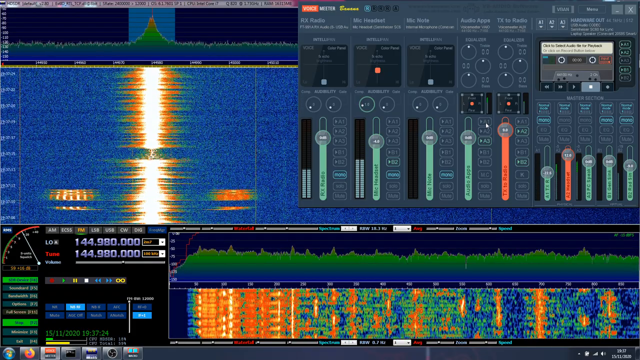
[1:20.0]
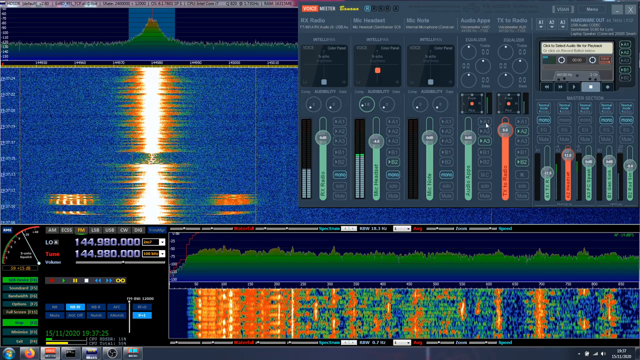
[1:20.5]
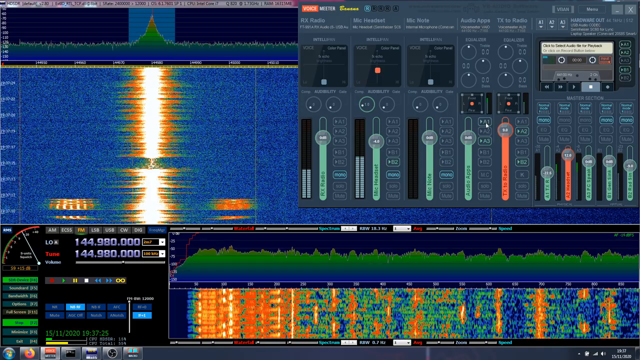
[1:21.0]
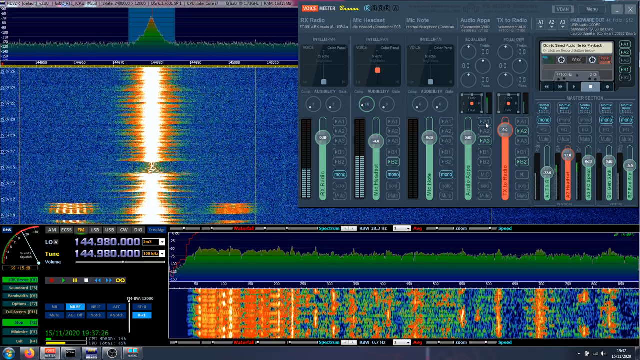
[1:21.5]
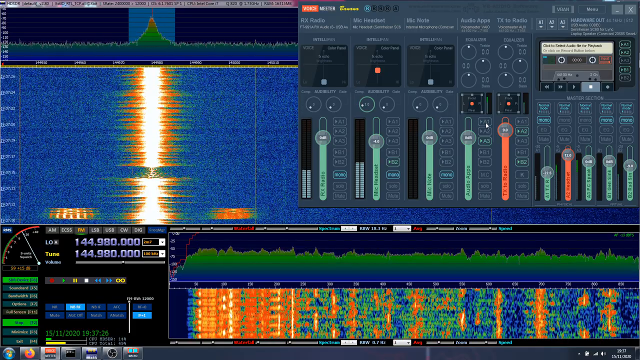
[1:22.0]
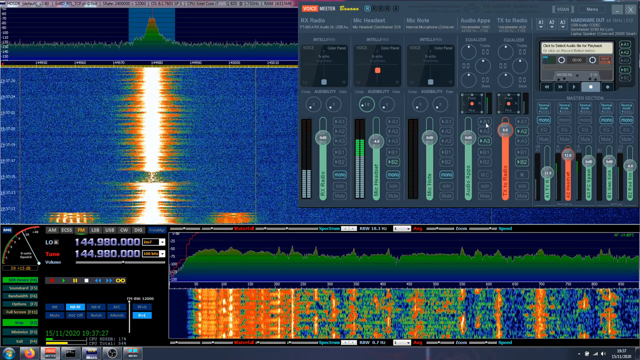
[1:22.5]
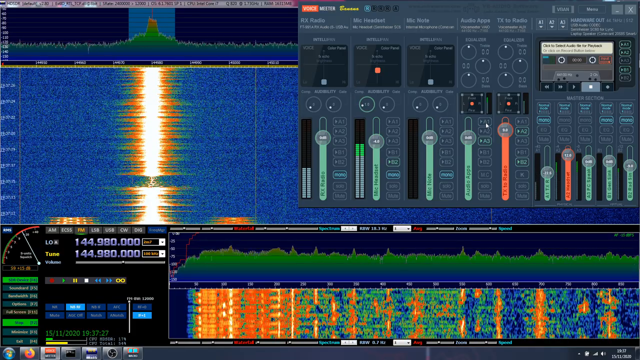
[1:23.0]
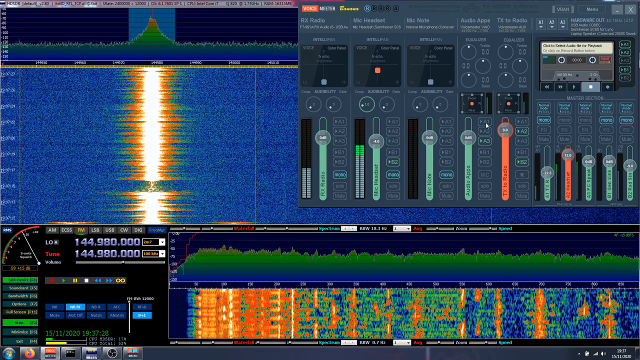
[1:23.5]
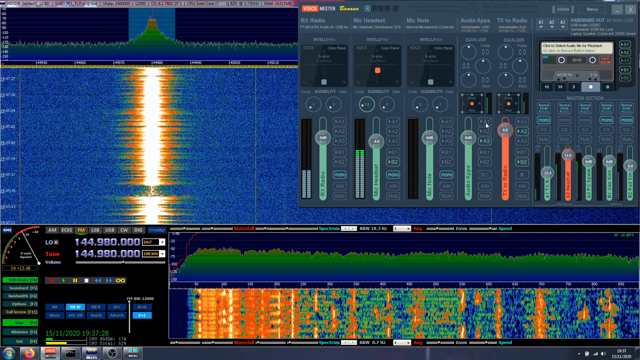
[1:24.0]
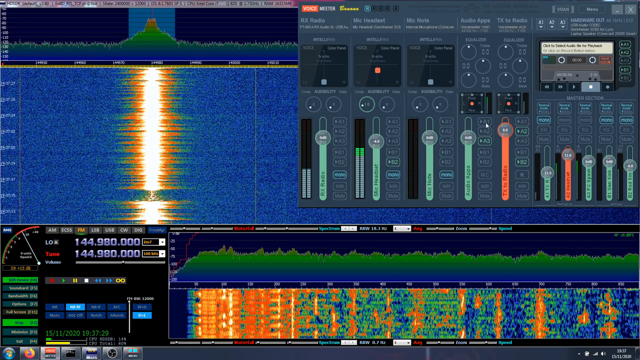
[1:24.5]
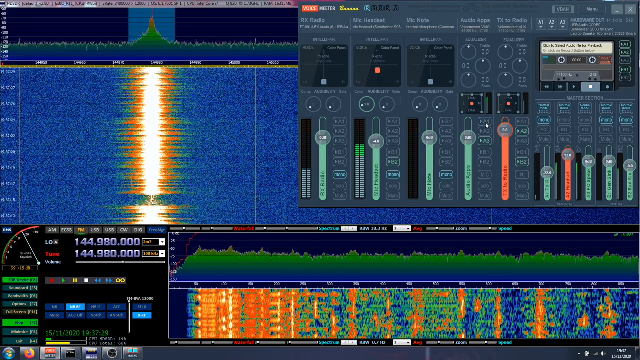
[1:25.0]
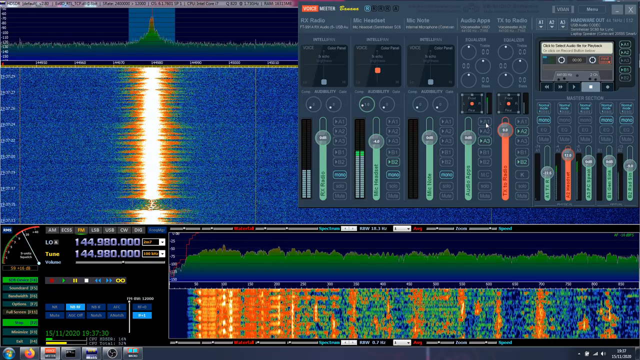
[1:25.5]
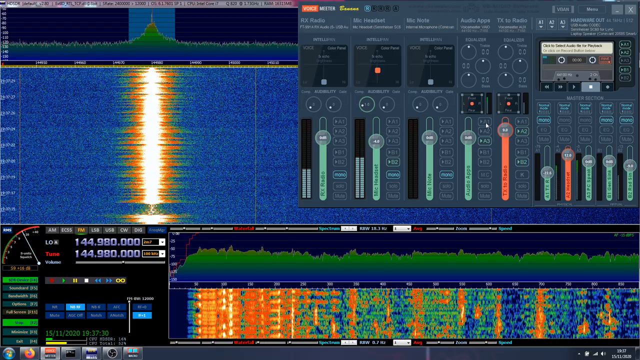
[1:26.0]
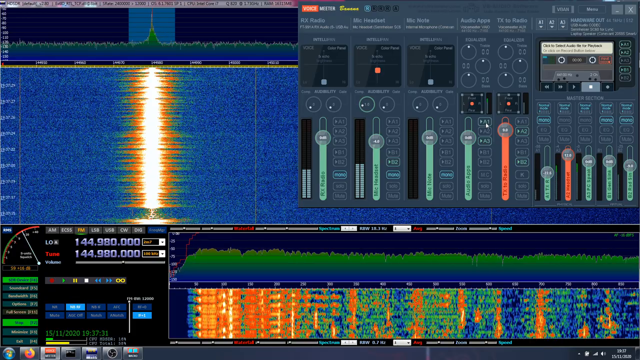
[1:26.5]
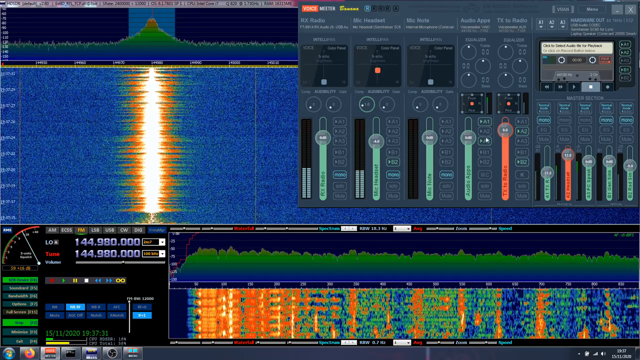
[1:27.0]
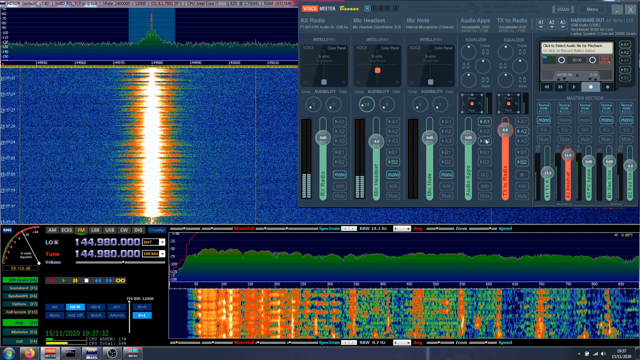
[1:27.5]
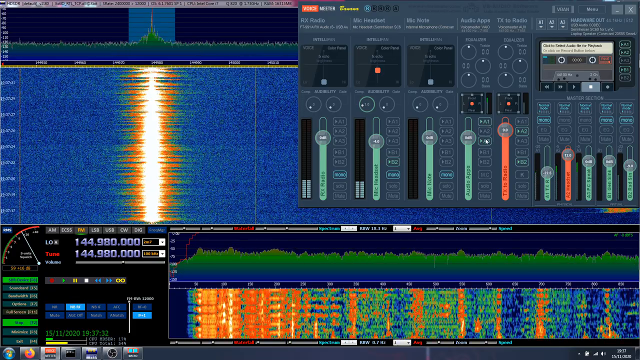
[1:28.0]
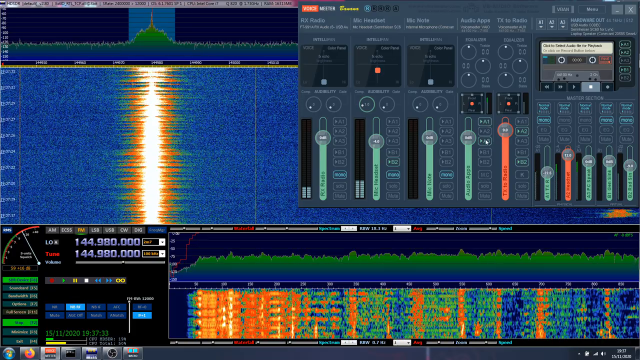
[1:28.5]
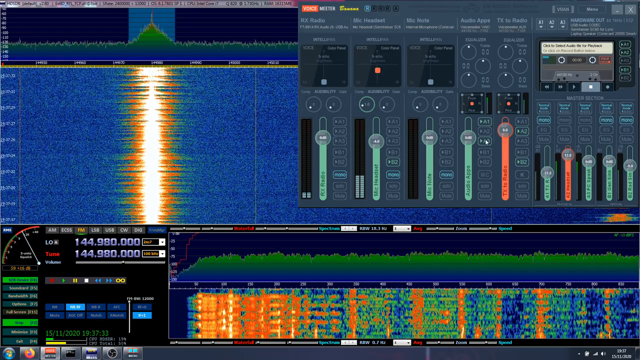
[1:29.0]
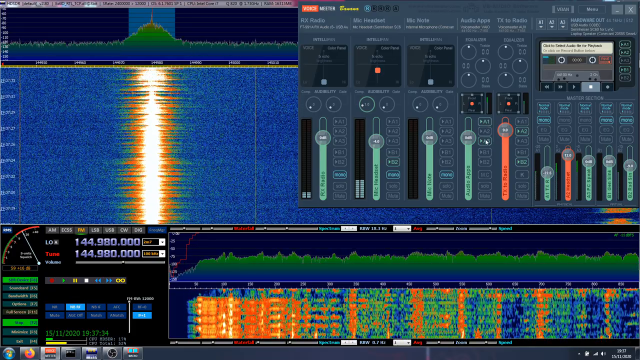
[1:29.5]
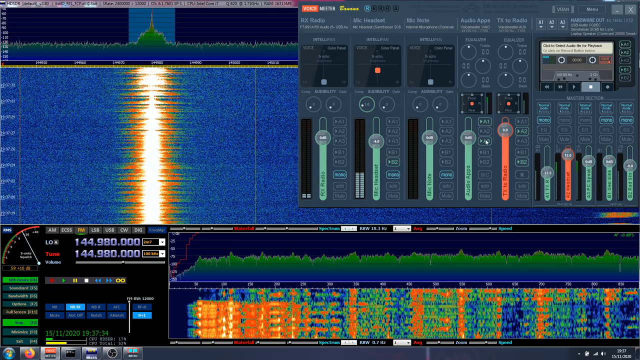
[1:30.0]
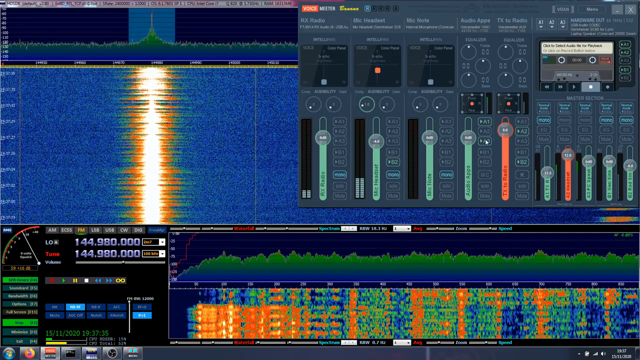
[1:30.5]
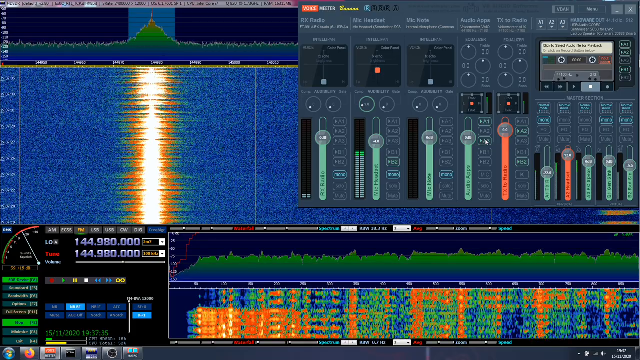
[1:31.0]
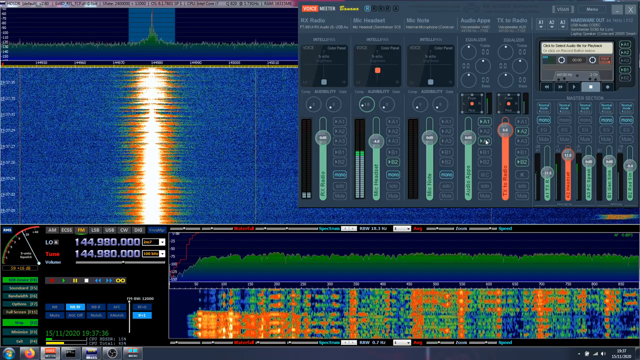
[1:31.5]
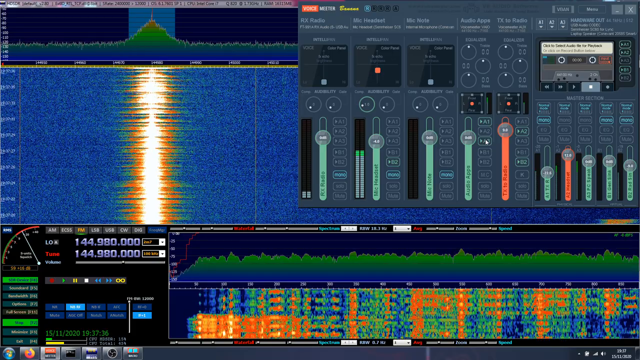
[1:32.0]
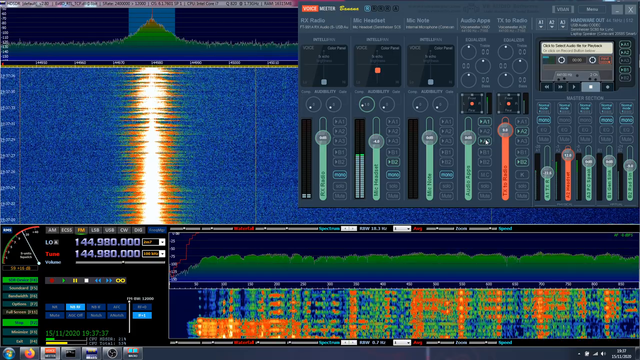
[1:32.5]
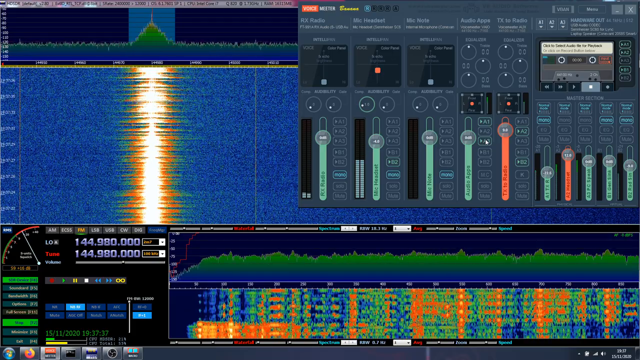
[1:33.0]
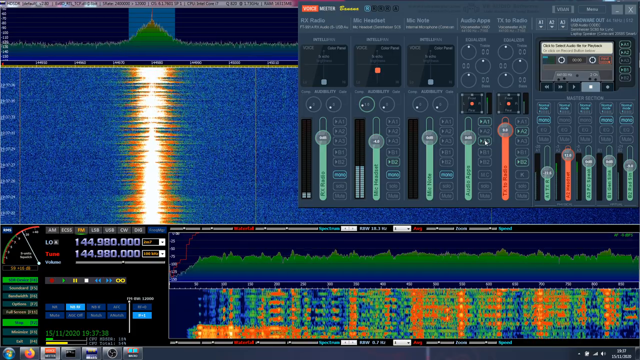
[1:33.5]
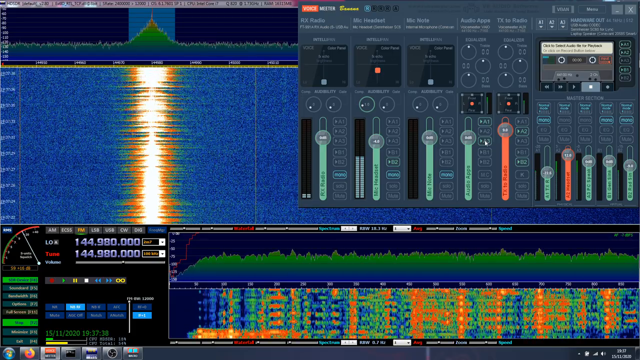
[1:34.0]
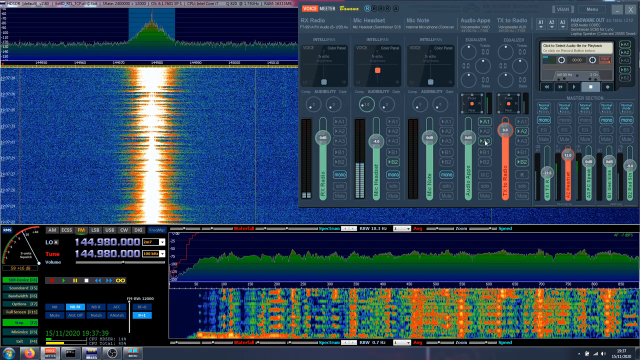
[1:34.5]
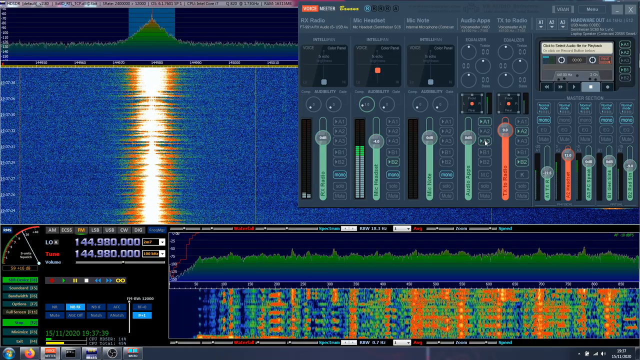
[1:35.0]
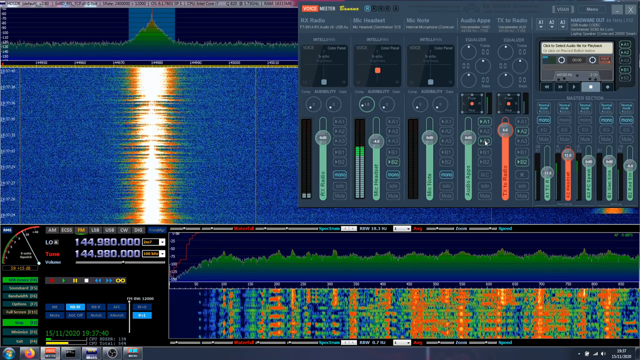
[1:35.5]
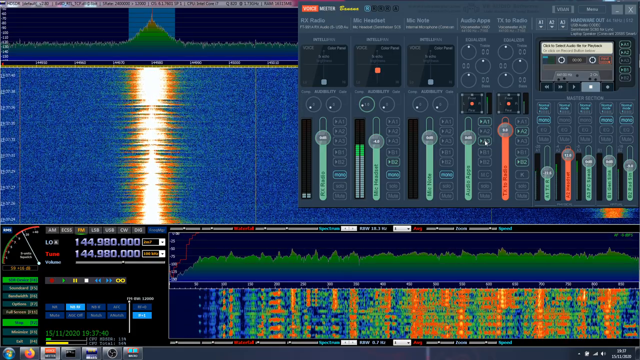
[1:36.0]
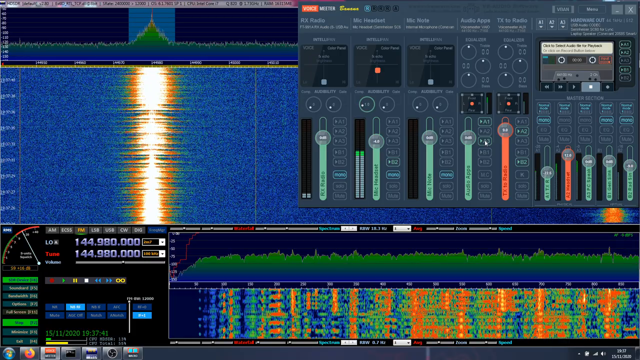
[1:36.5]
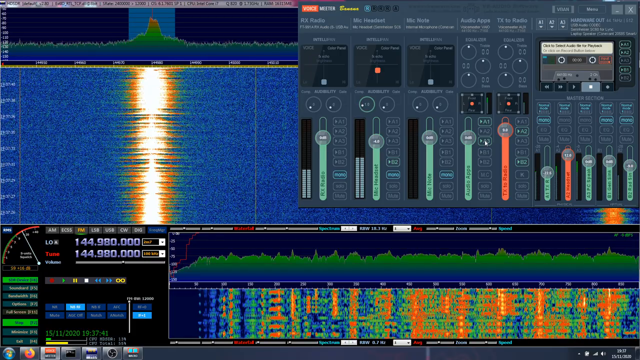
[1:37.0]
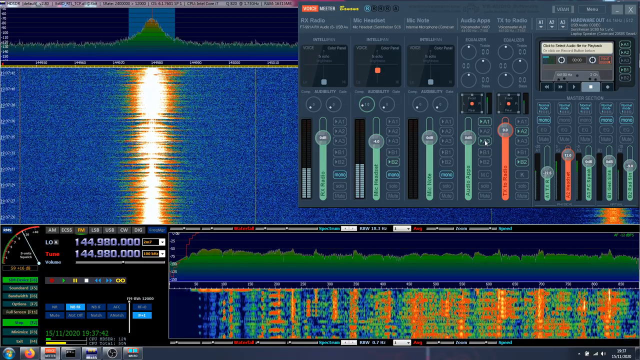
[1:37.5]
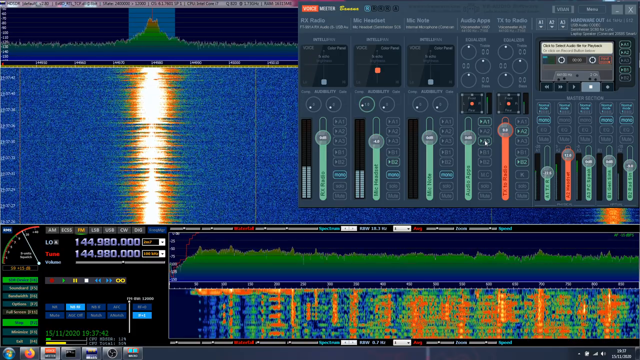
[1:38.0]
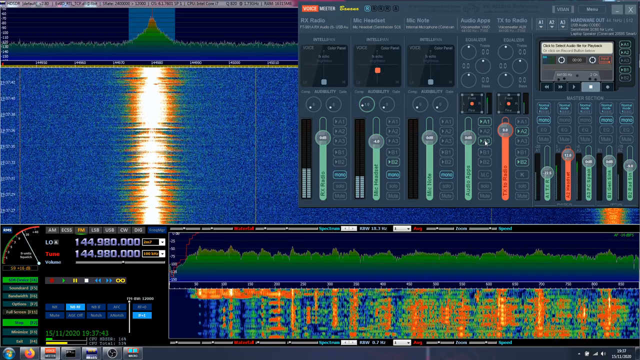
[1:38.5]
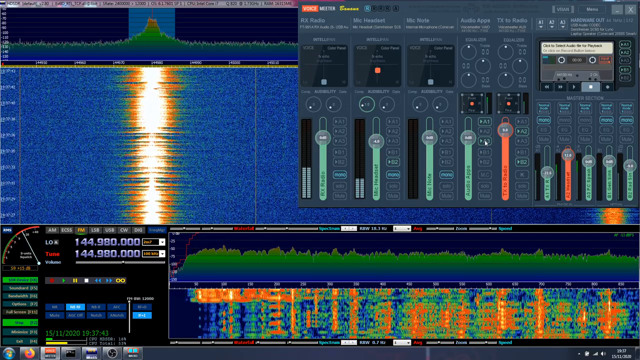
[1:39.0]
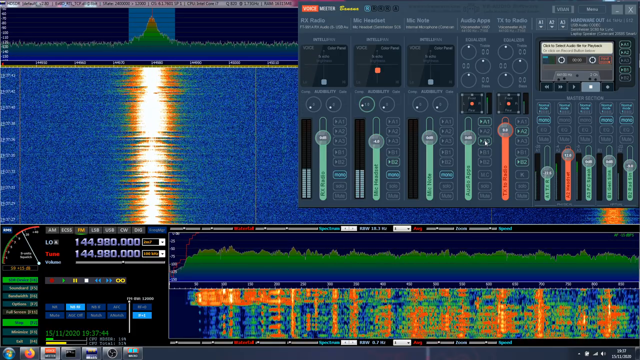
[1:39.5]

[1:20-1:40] Something appears to be recording in the digital audio workstation, apparently the mic headset source, as indicated below. A blue field in the project seems to move from top to bottom, and white and orange waveforms seem to be created, apparently by a person singing or talking into the mic, possibly over an instrumental track. The software seems to offer a variety of plugins and tools for working with audio.